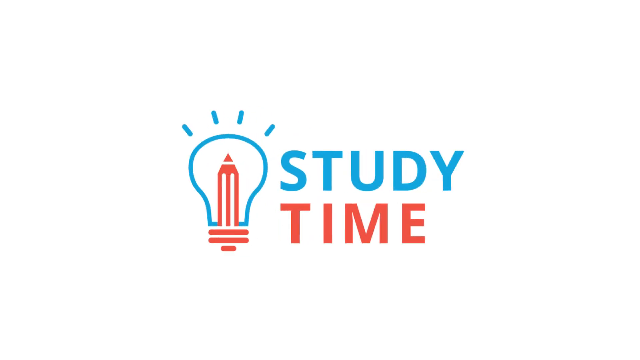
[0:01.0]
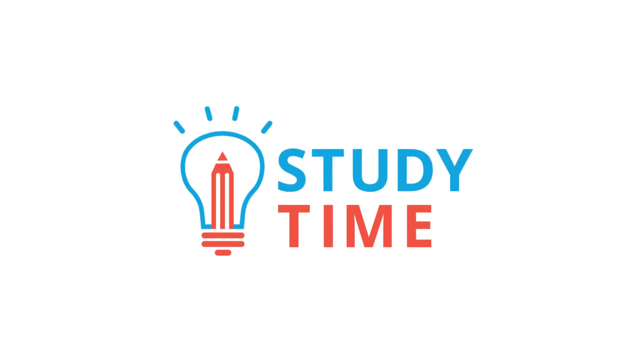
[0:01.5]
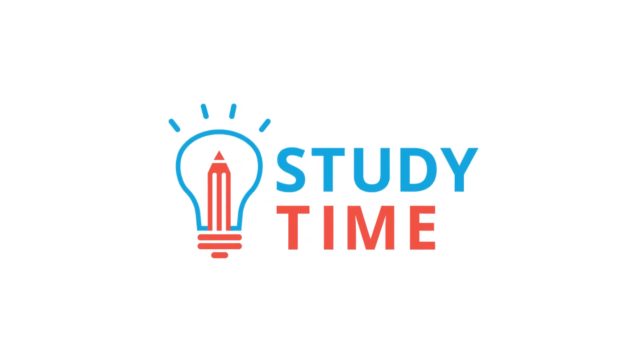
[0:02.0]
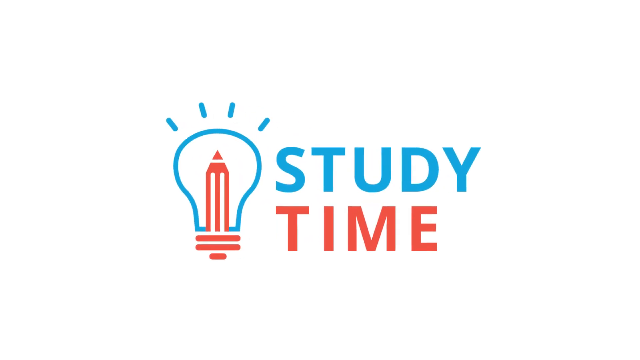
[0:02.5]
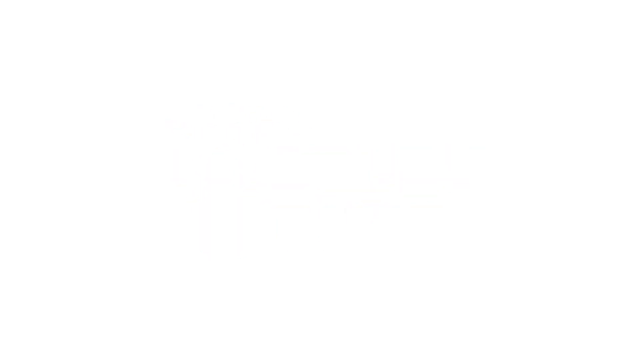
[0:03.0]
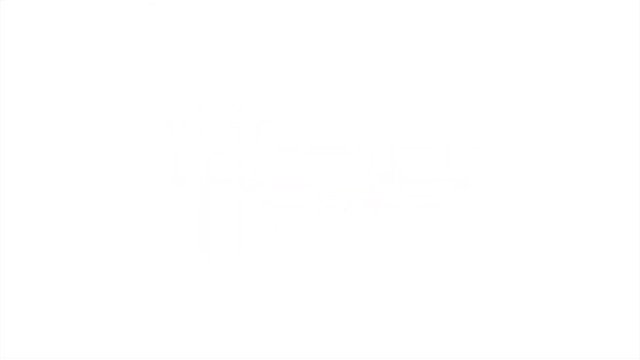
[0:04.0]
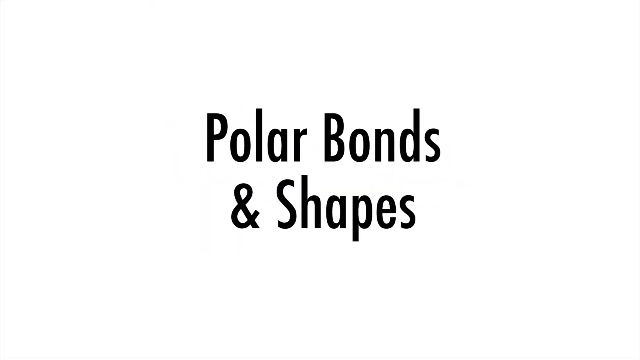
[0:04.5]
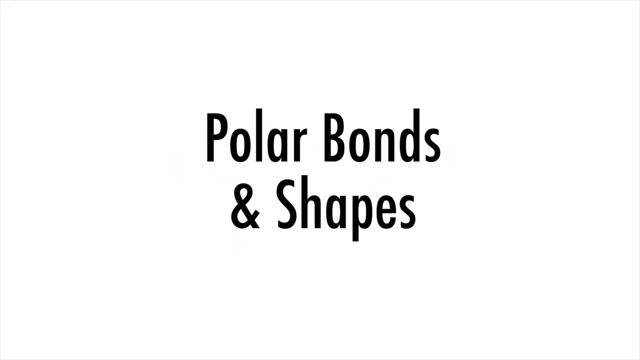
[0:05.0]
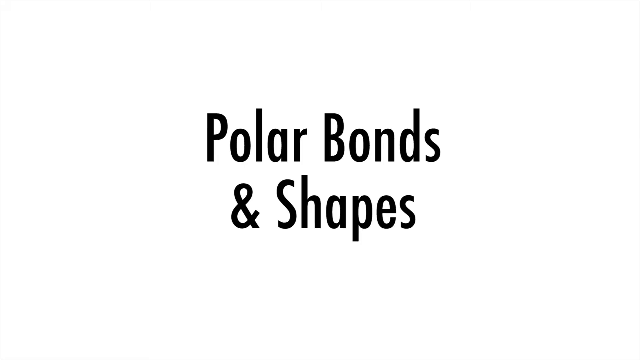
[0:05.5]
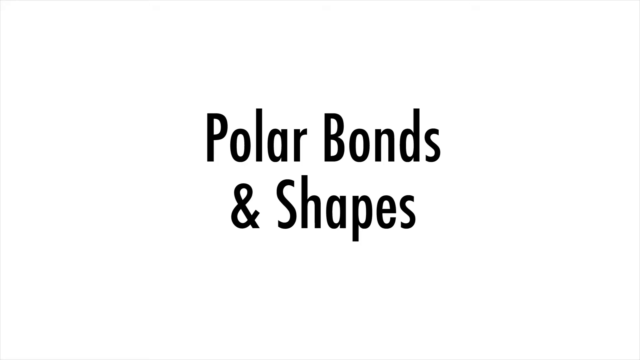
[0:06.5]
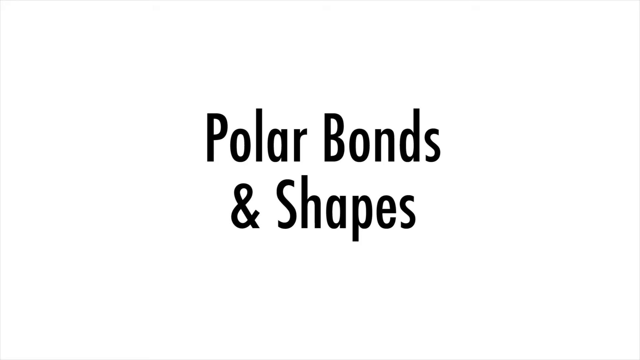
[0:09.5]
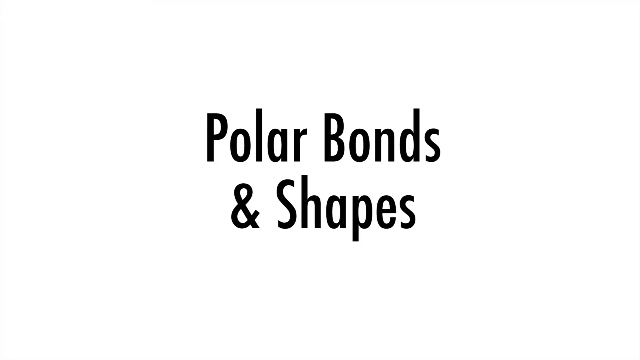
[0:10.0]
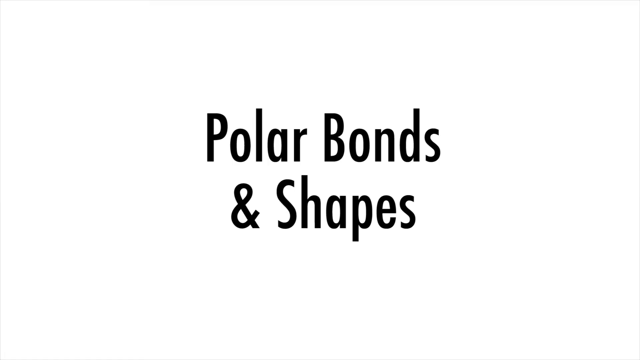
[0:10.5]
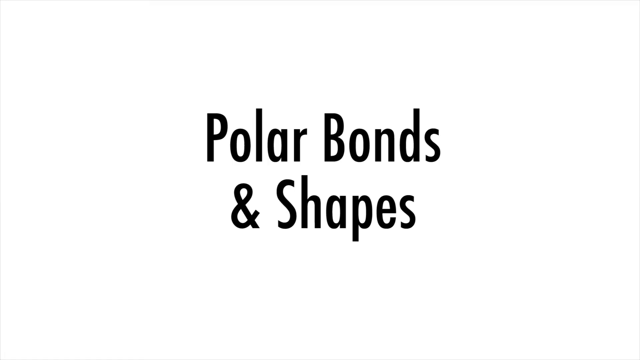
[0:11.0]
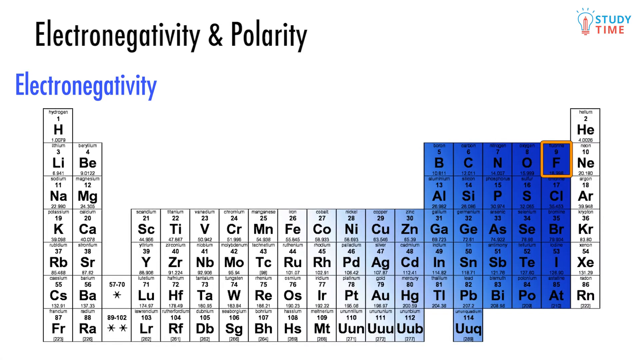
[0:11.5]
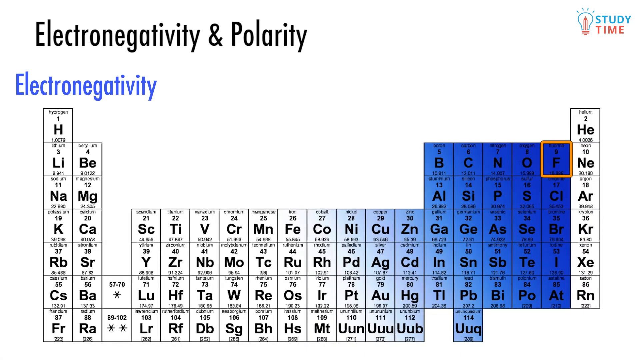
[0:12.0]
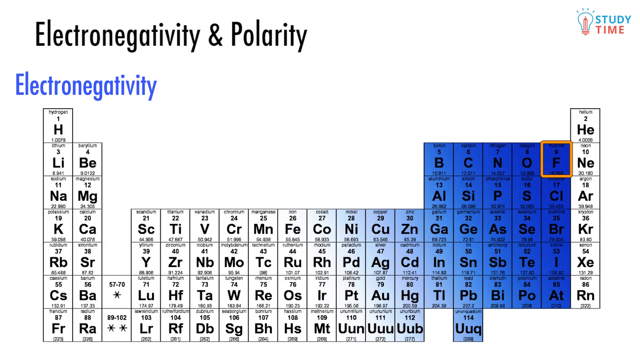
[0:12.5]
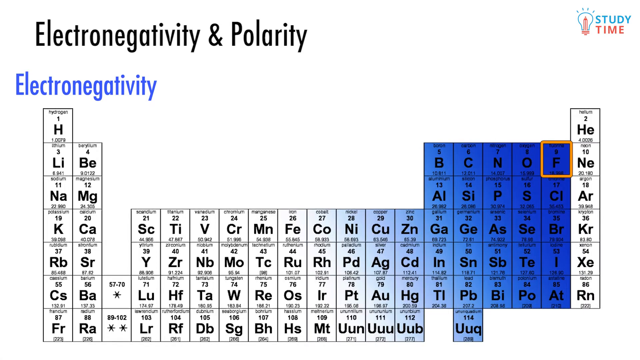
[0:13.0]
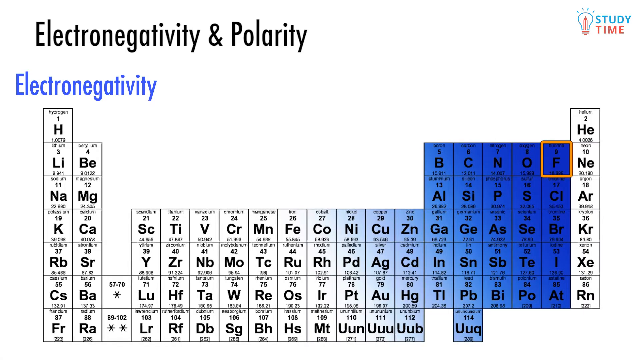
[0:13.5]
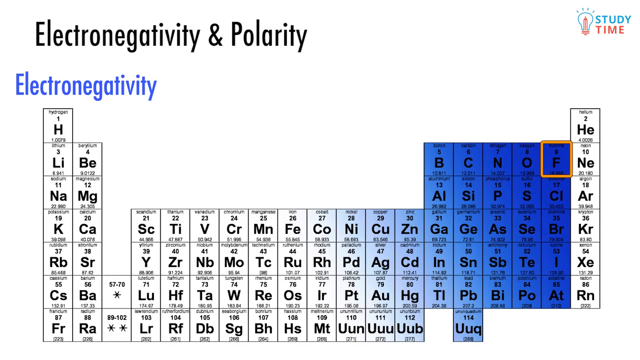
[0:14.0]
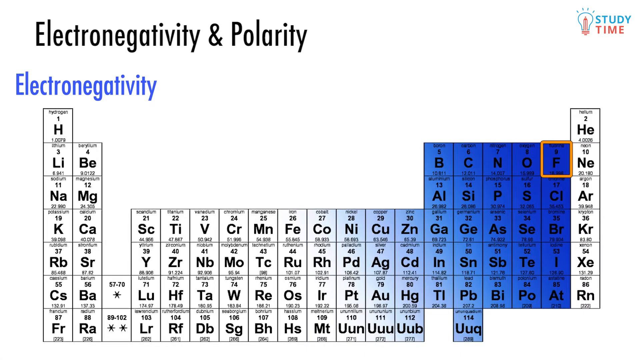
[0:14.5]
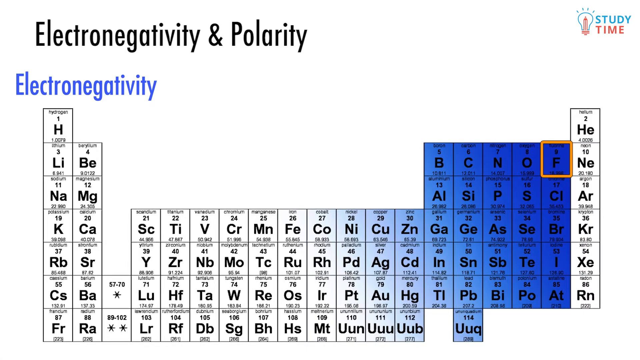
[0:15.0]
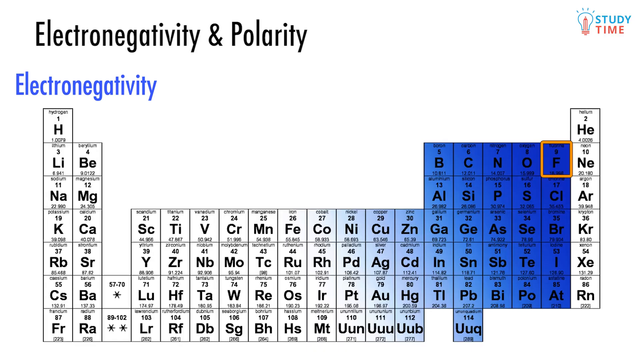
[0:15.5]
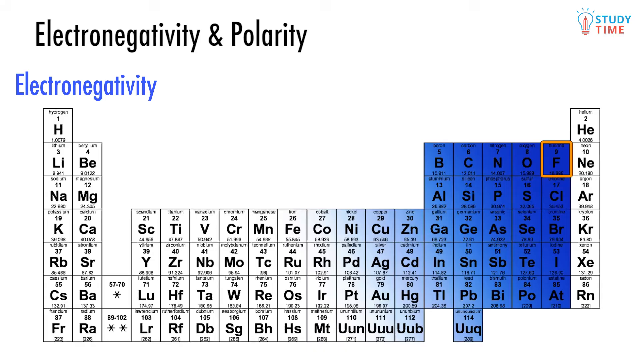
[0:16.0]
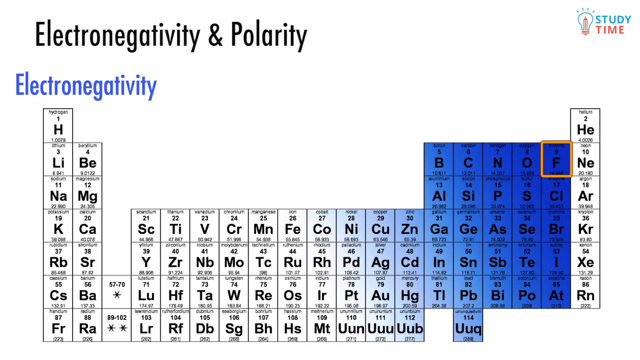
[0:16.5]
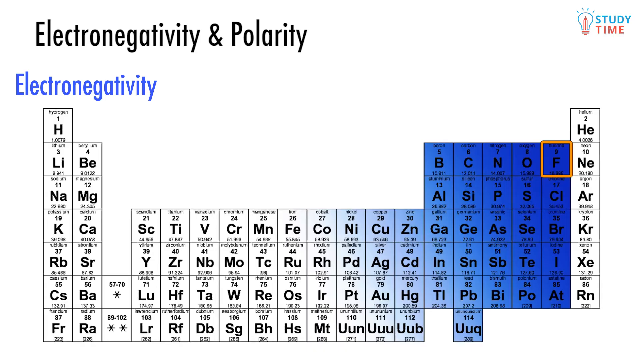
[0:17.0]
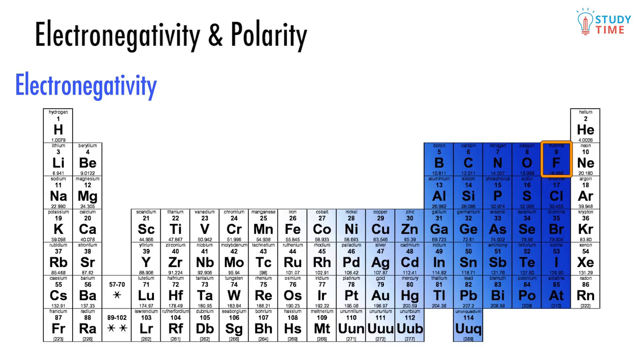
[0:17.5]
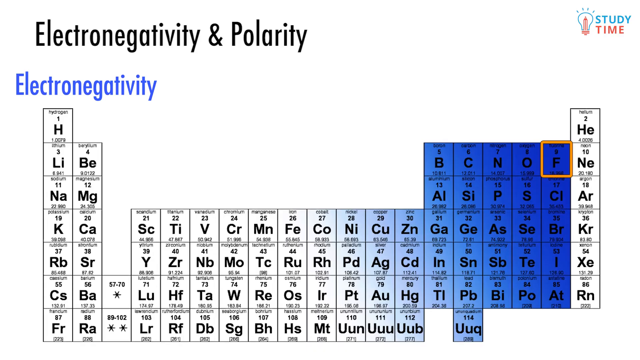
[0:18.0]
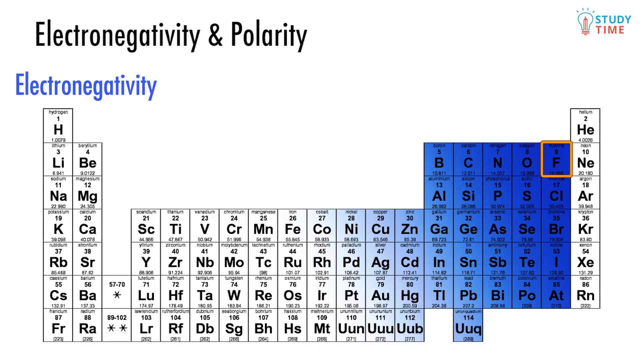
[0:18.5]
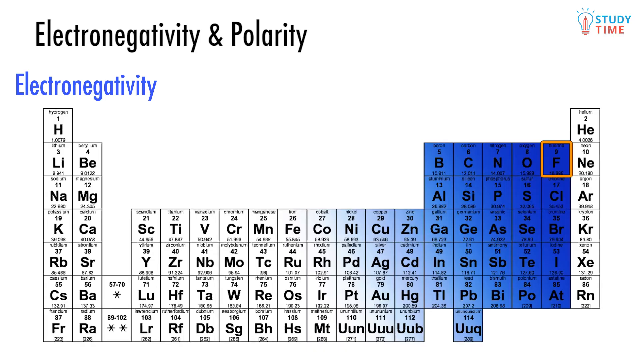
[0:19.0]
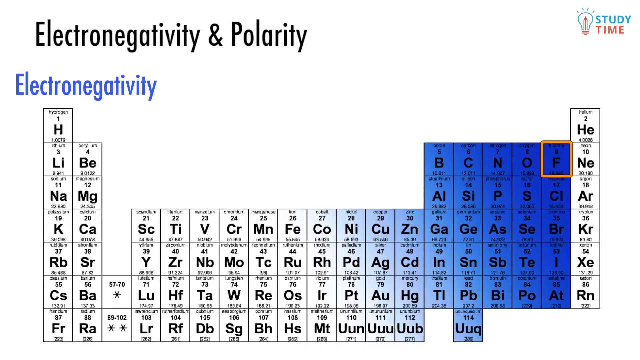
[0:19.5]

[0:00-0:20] On a white background, an intro immediately shows the text "study time", with "study" in a light blue color and "time" below it in red; half of the colors form something like a light ball. The video then transitions to the text "polar bonds and shapes", and for a while nothing much happens visually. Next, a periodic table appears showing electronegativity and polarity, like a graph based on an inserted image. On the table, the F element appears to be highlighted with an orange, sort of rectangular shape.